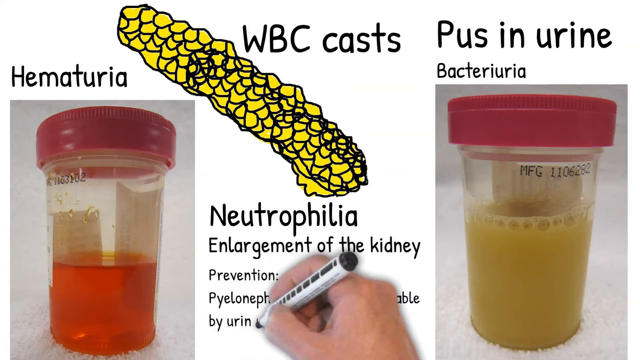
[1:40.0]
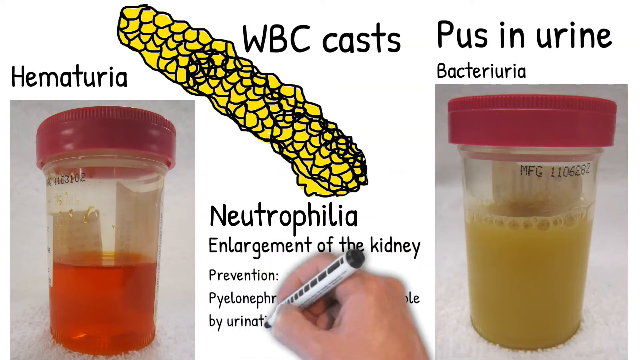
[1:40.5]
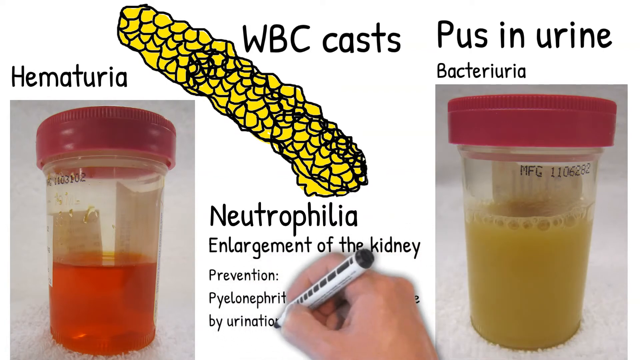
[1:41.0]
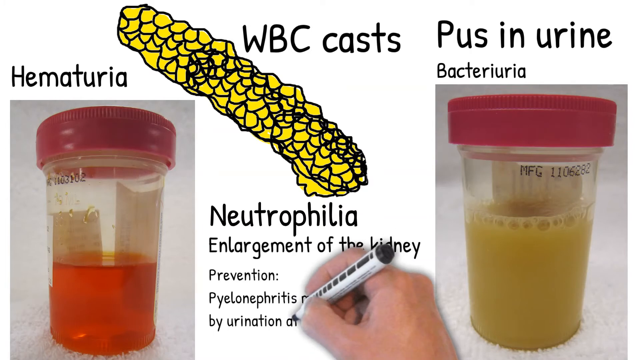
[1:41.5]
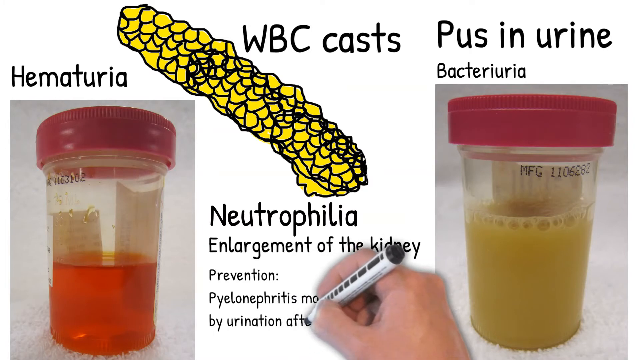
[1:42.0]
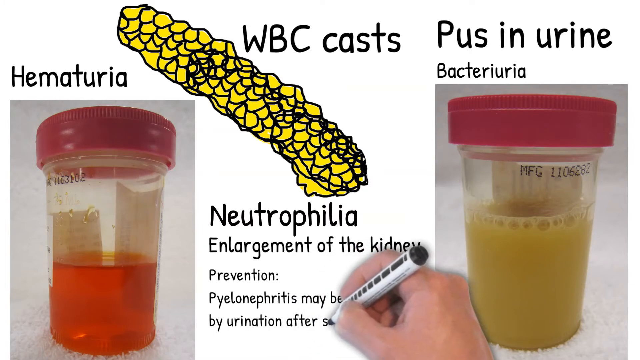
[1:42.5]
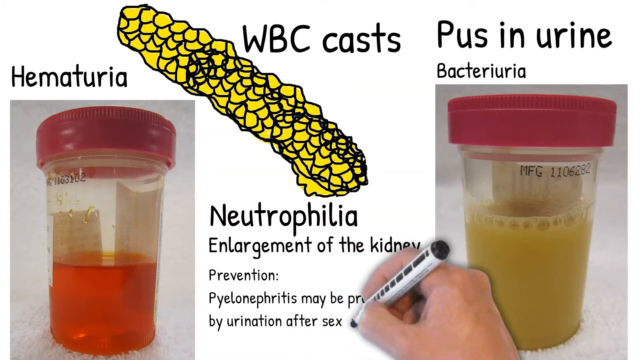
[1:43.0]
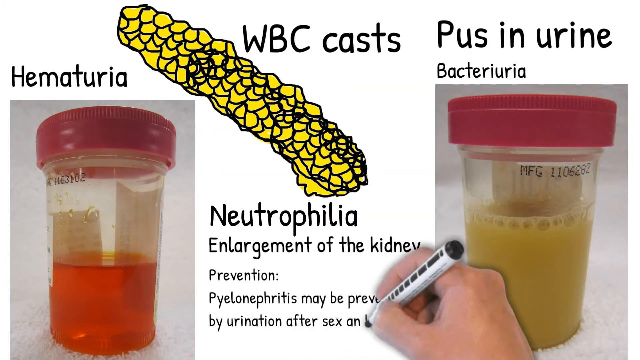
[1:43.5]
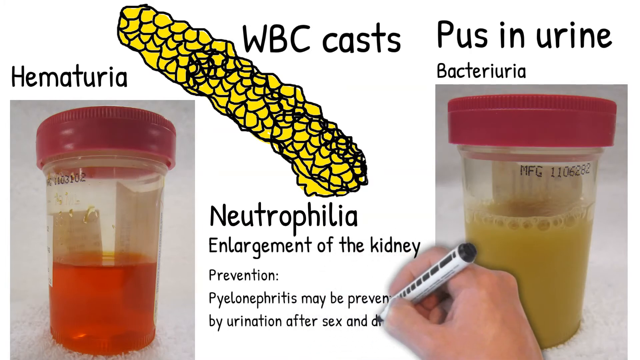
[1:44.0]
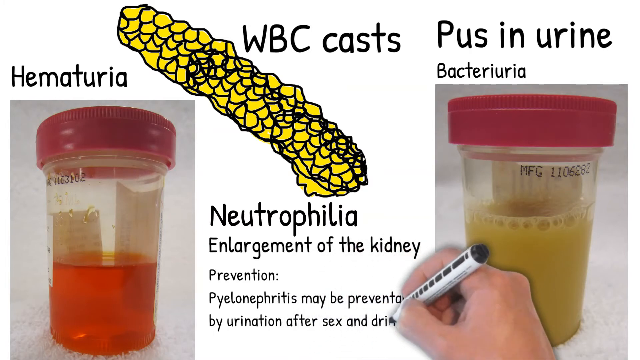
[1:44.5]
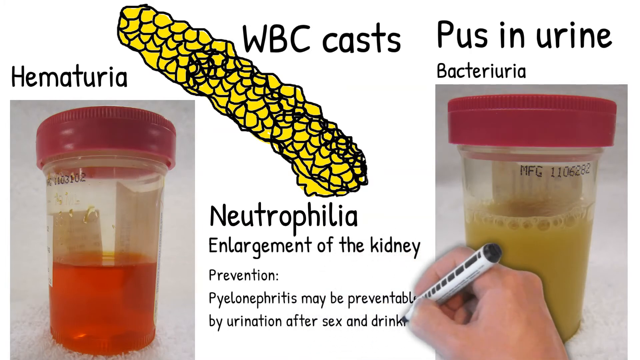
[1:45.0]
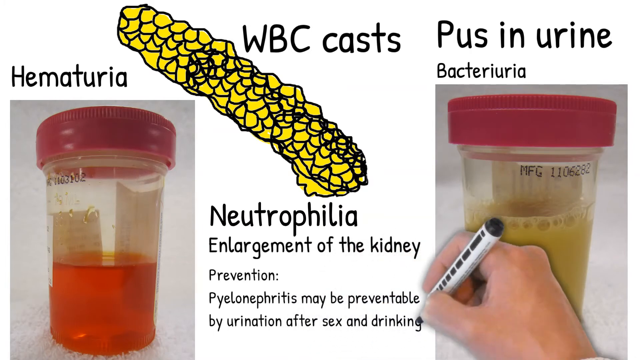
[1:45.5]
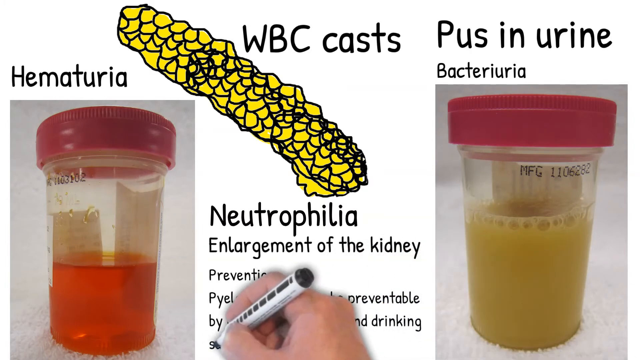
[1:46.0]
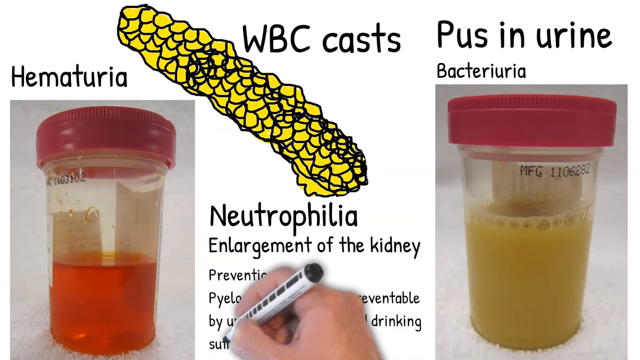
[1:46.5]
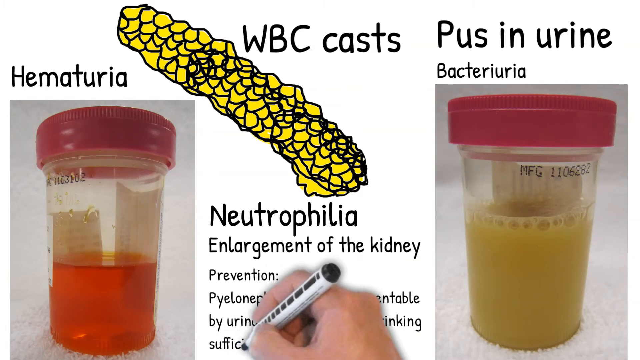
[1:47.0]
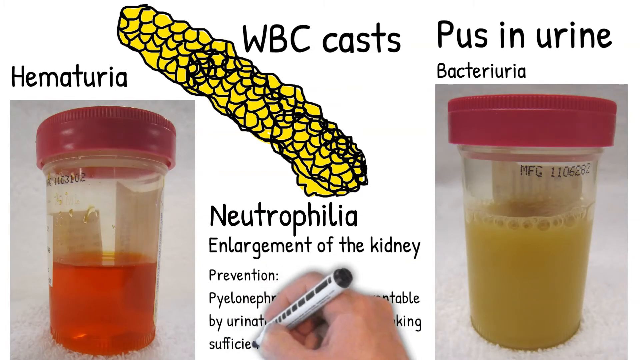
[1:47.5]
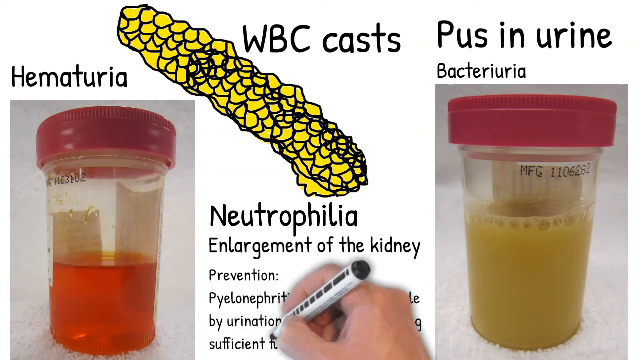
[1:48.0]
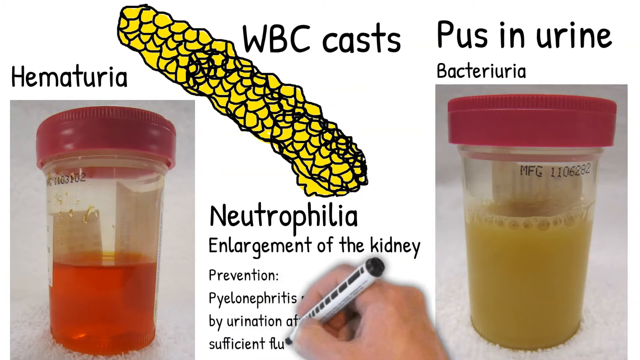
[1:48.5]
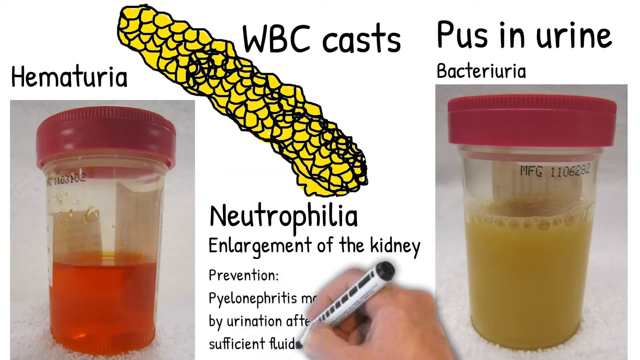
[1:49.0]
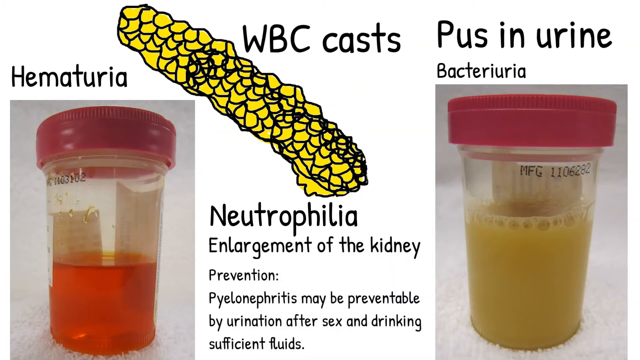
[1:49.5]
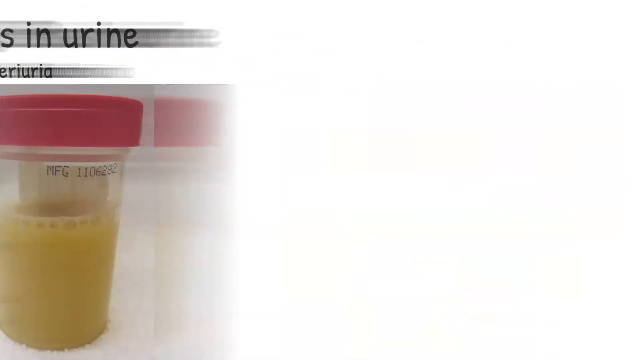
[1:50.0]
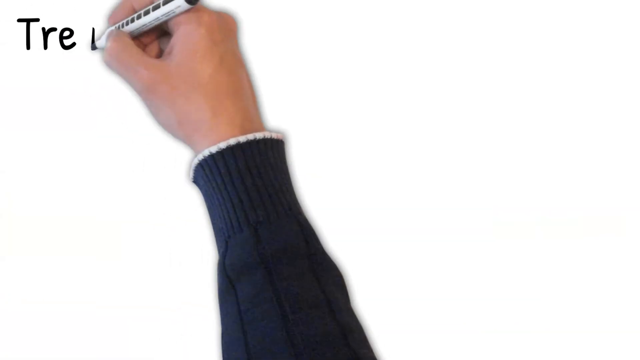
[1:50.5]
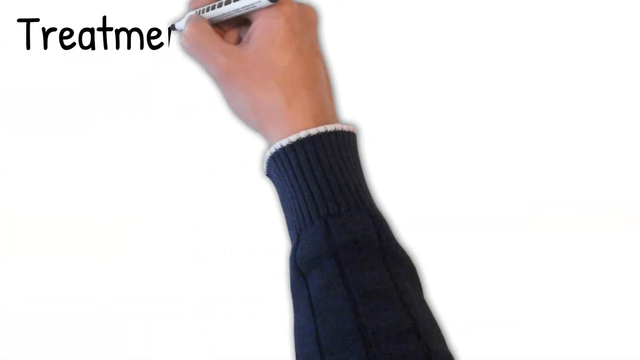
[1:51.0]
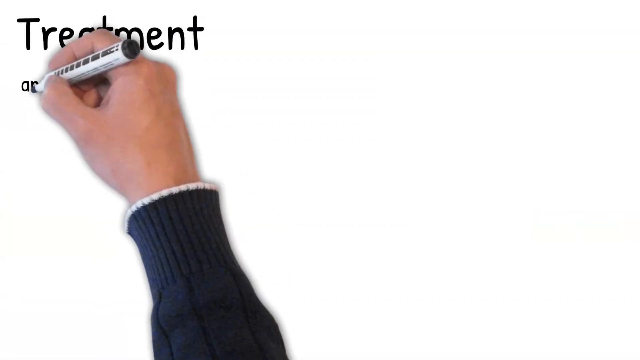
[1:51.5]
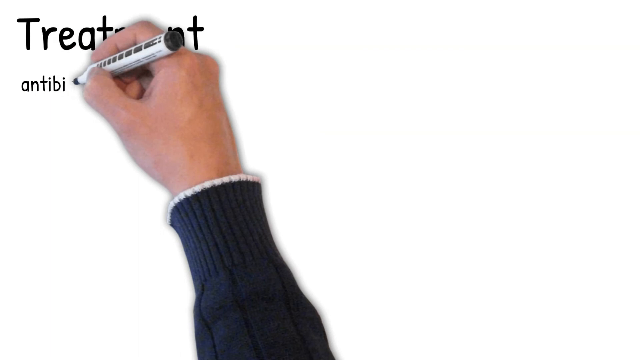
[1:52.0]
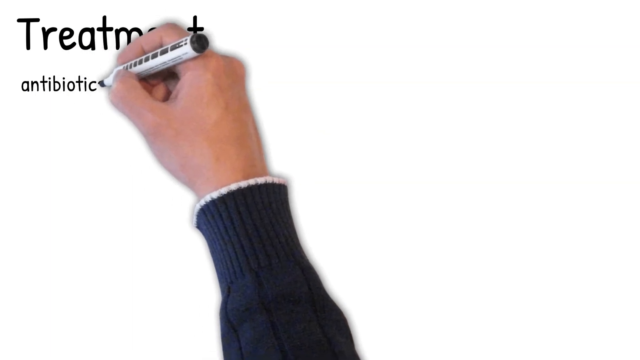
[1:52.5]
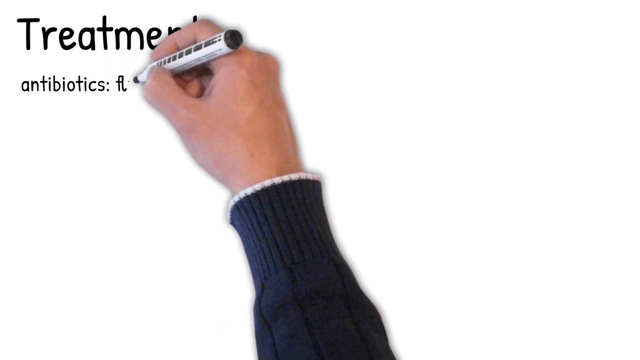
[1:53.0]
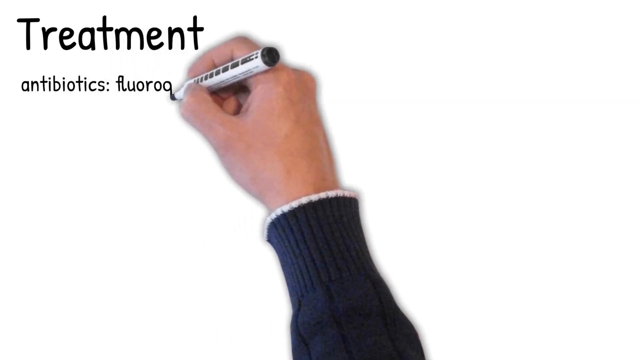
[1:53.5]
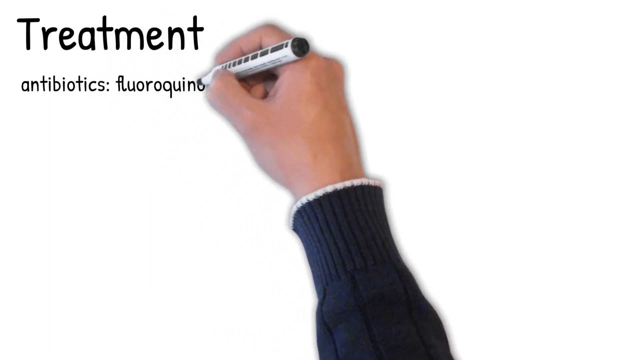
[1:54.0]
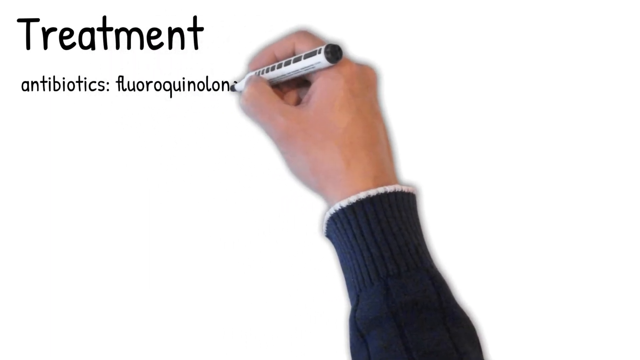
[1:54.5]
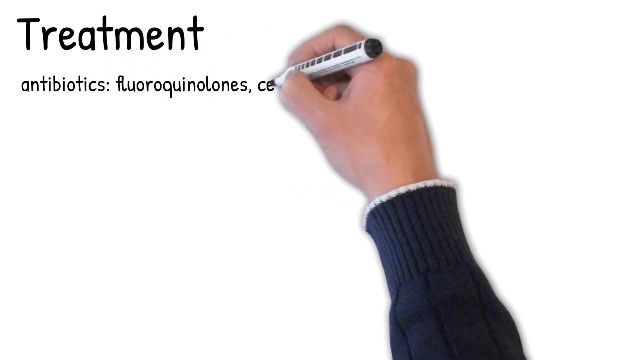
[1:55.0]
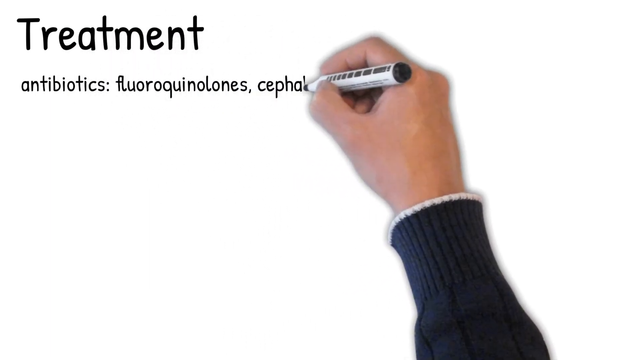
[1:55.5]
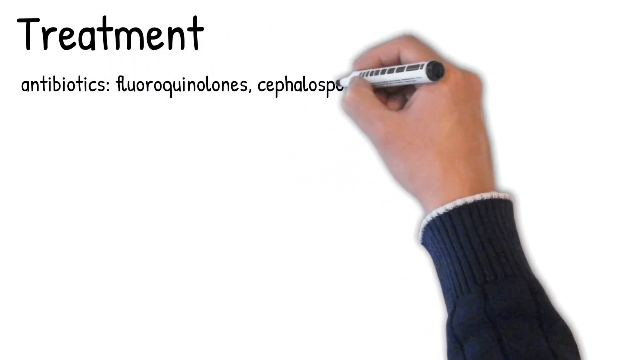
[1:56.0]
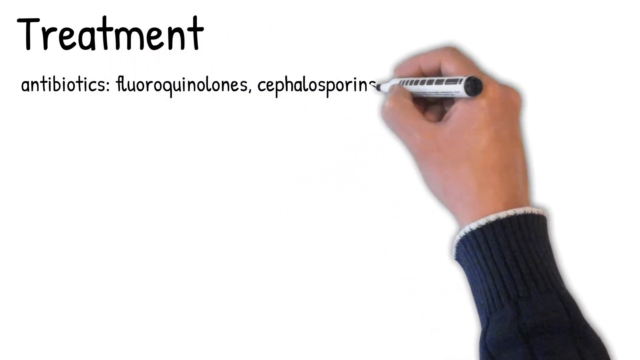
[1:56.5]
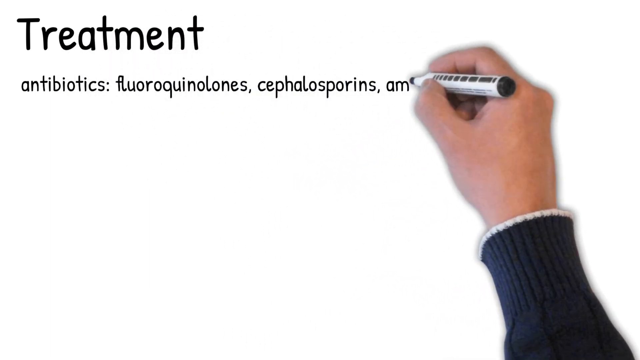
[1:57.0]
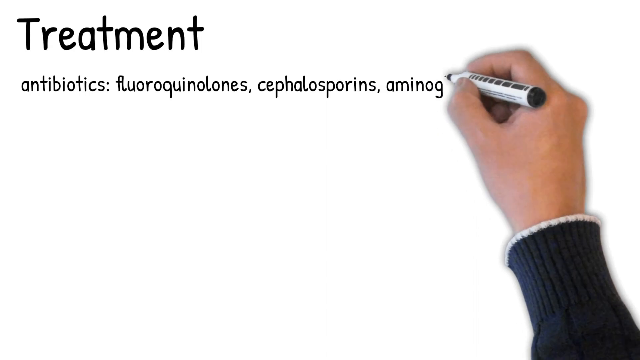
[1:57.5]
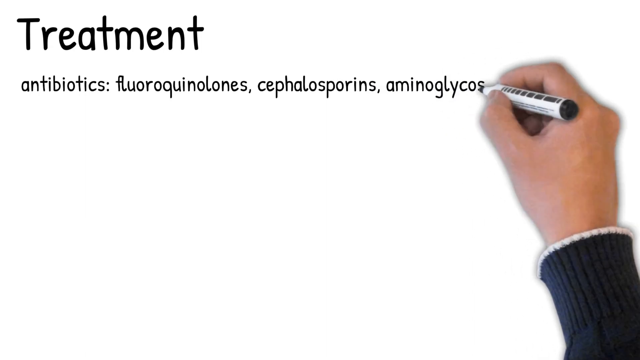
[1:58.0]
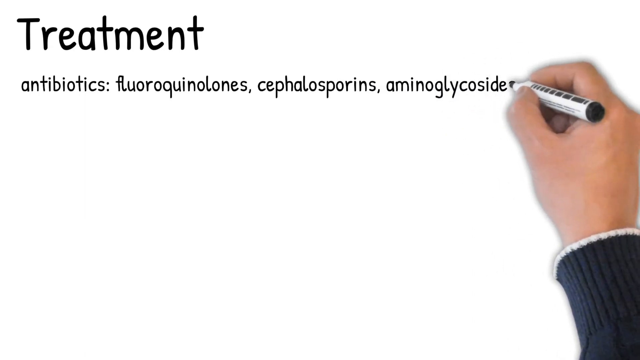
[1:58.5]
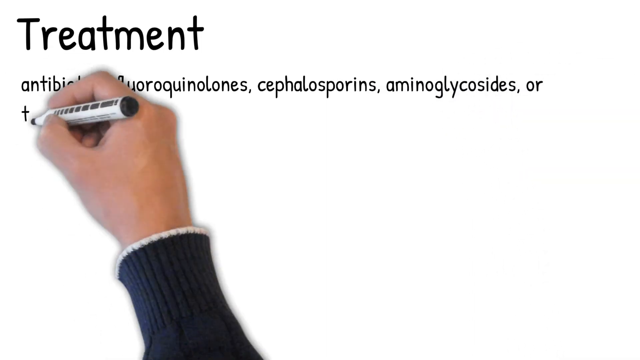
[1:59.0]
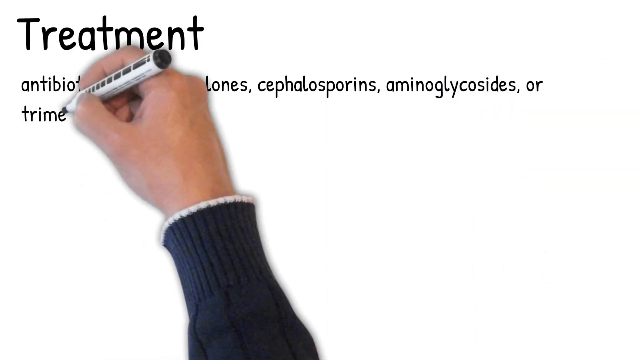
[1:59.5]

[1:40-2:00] There is a dark orange urine sample with "hematuria" above it in black, and a yellow mass with "WBC cast" above it in black and "neutrophilia, enlargement of the kidney" underneath, along with some other text that is hard to make out. Under "prevention" it says pyelonephritis "may be prevented by urination after sex and drinking sufficient fluid". There is also the pus-filled urine sample. The man then writes "treatment", "antibiotics", "fluoroquinolones", "cephalosporins", "aminoglycosides", and one more antibiotic beginning with "trim" that is not fully legible.